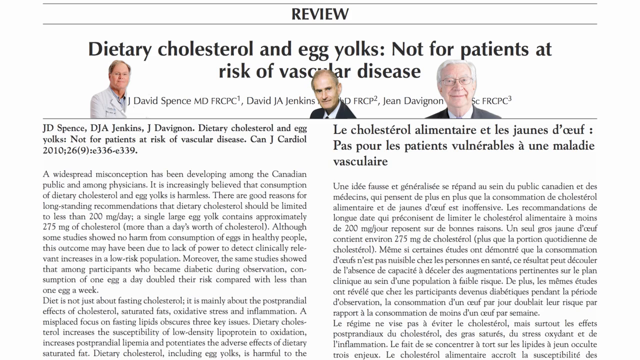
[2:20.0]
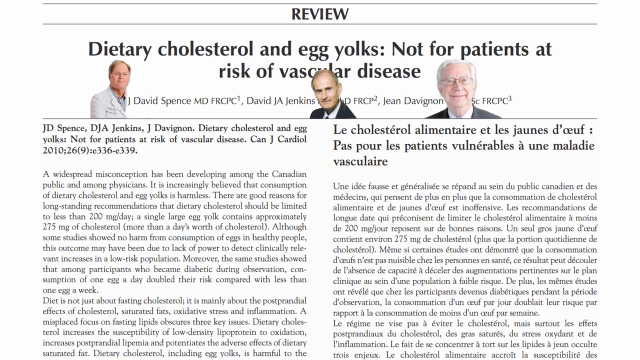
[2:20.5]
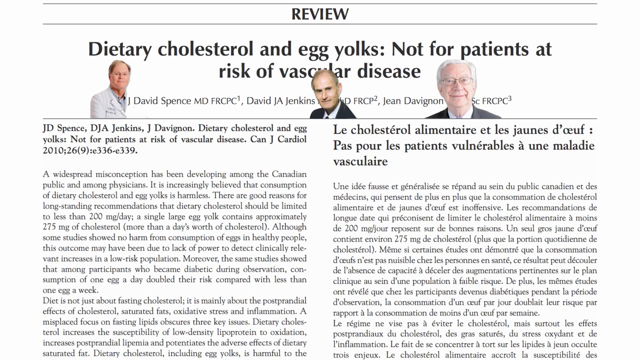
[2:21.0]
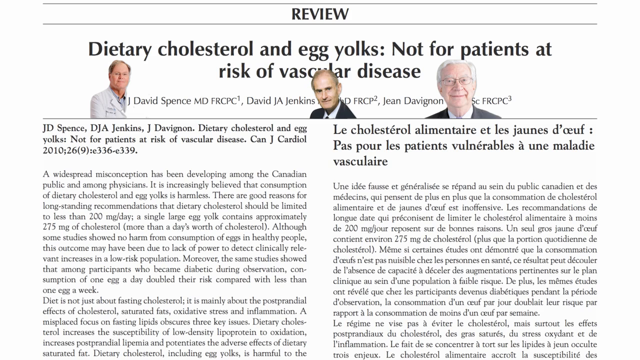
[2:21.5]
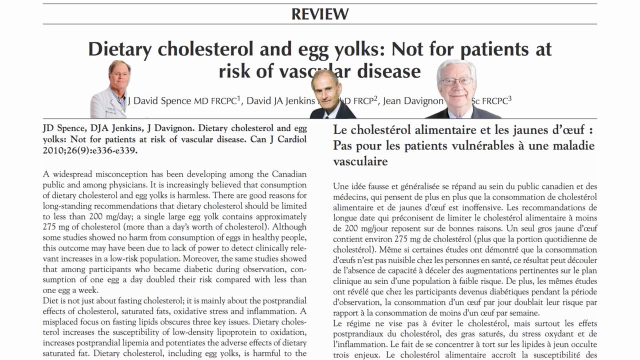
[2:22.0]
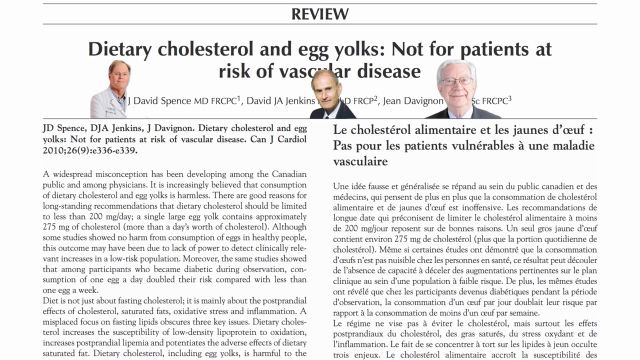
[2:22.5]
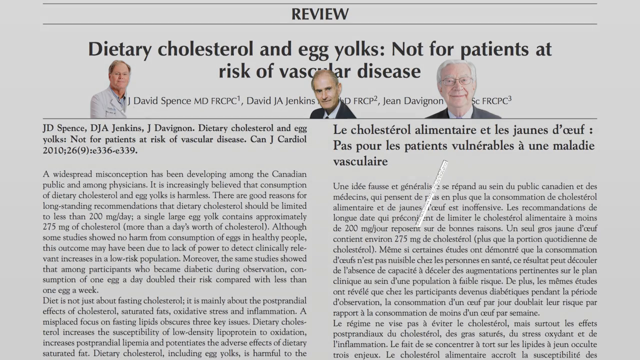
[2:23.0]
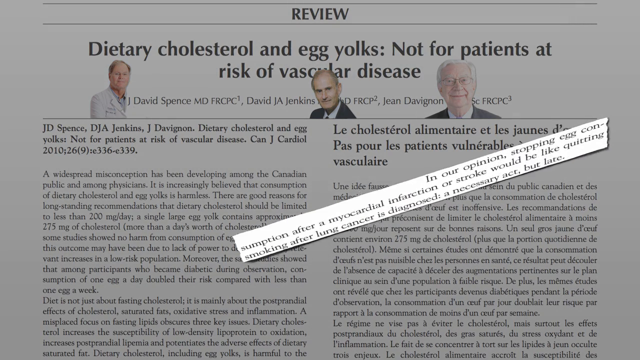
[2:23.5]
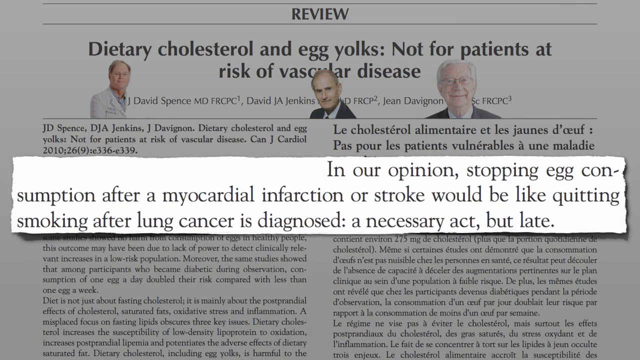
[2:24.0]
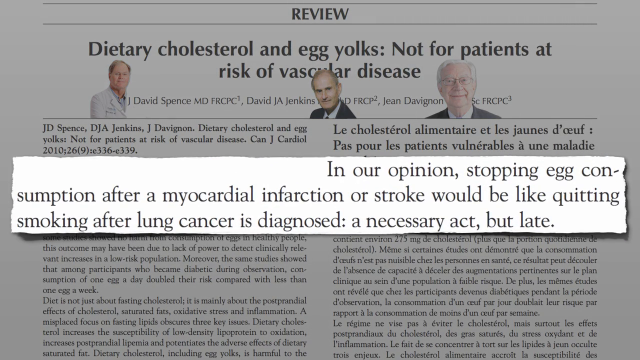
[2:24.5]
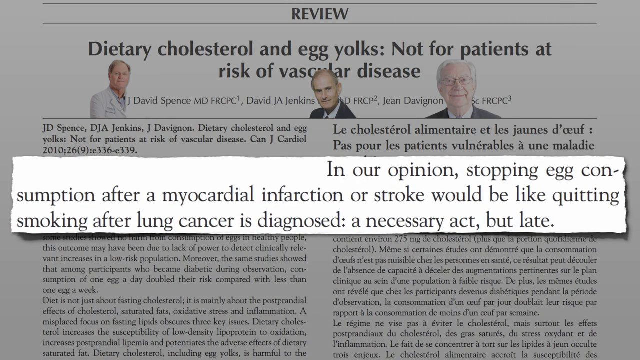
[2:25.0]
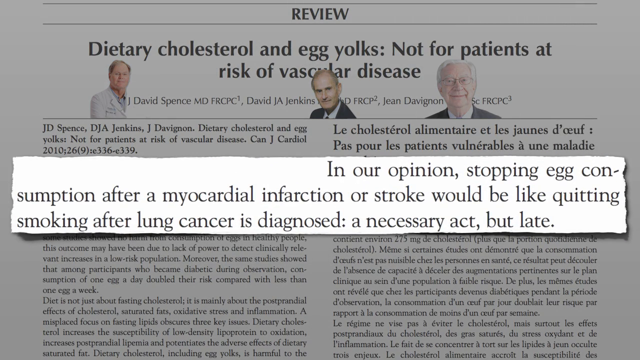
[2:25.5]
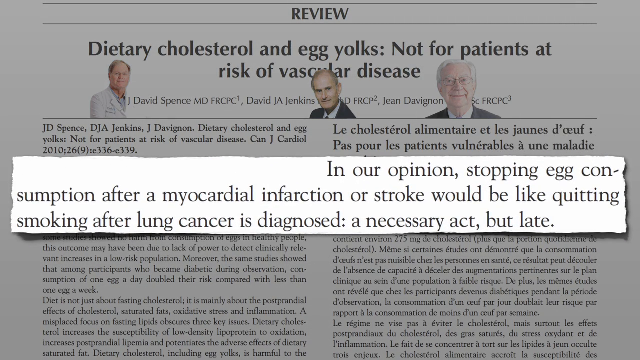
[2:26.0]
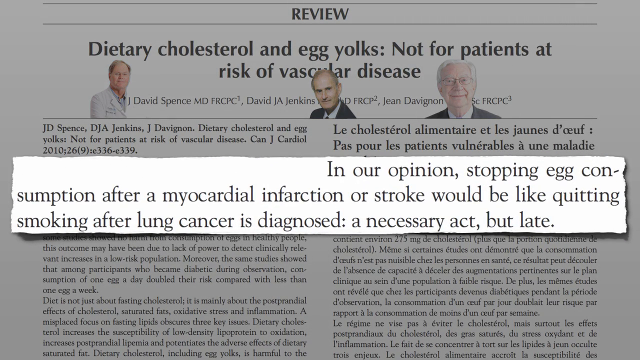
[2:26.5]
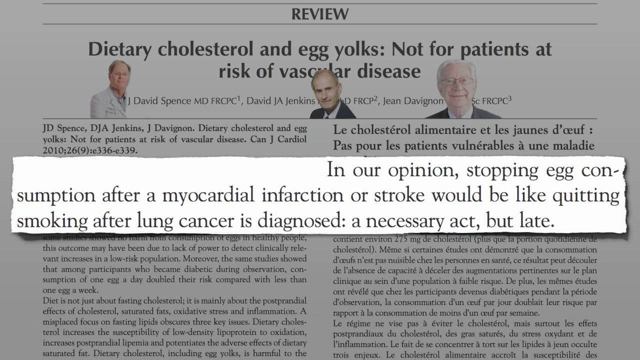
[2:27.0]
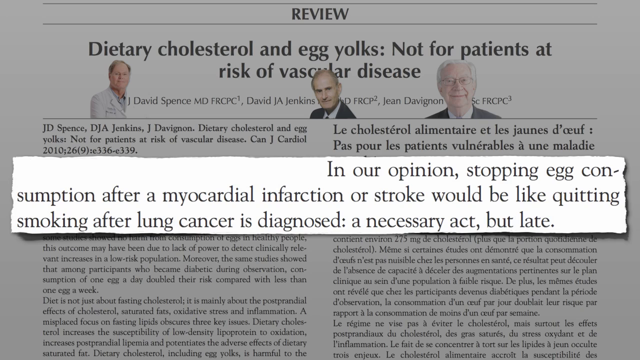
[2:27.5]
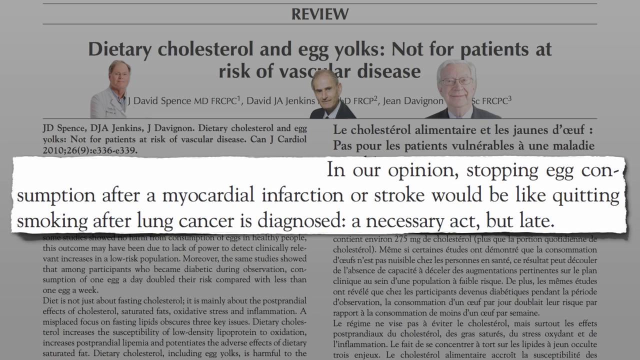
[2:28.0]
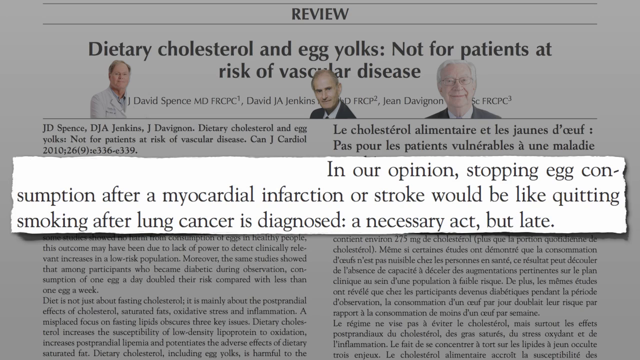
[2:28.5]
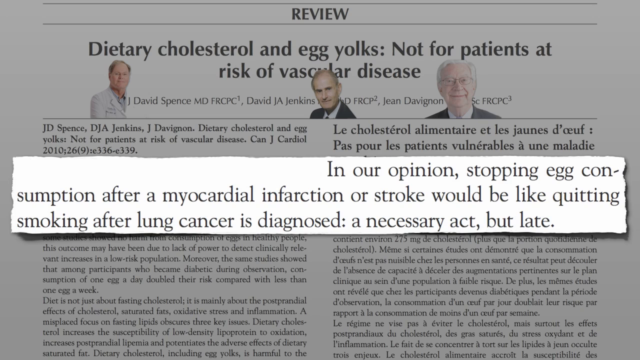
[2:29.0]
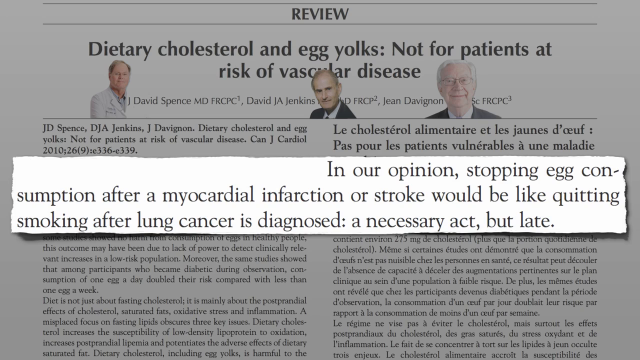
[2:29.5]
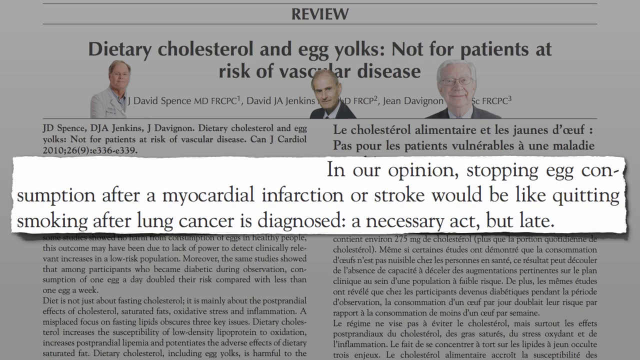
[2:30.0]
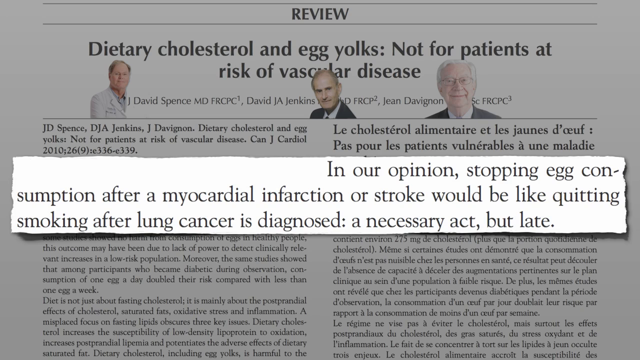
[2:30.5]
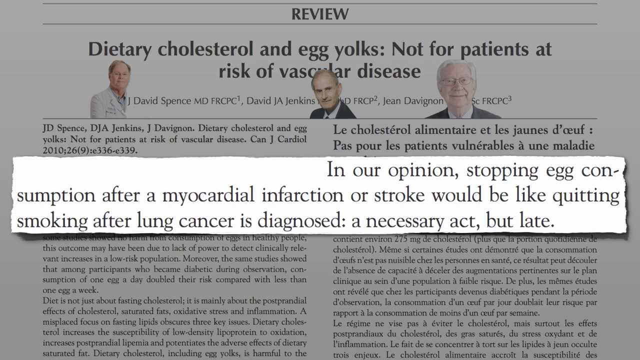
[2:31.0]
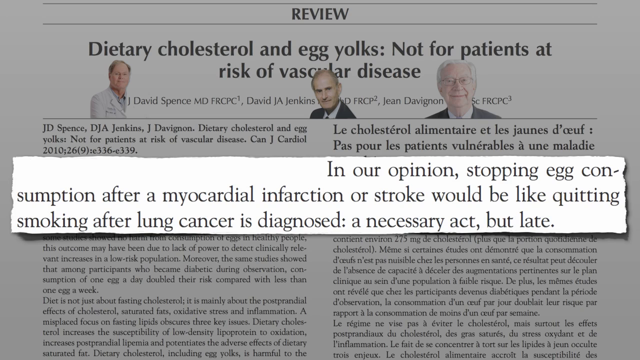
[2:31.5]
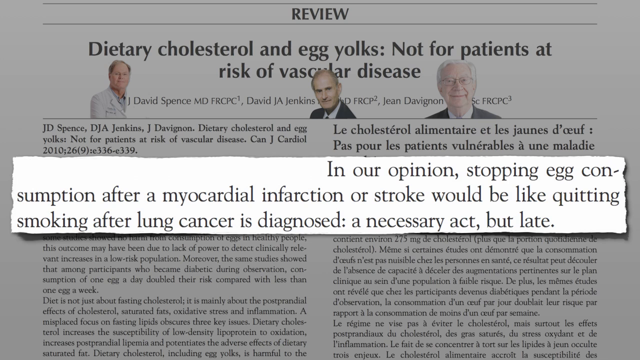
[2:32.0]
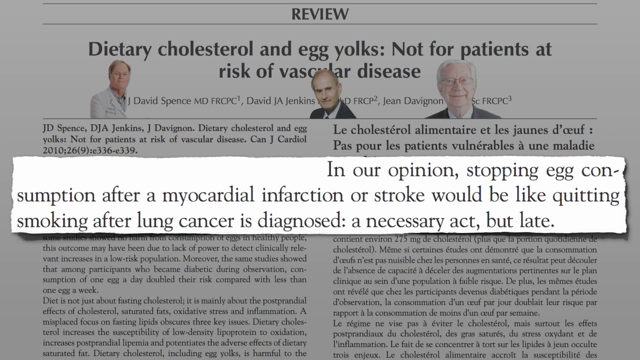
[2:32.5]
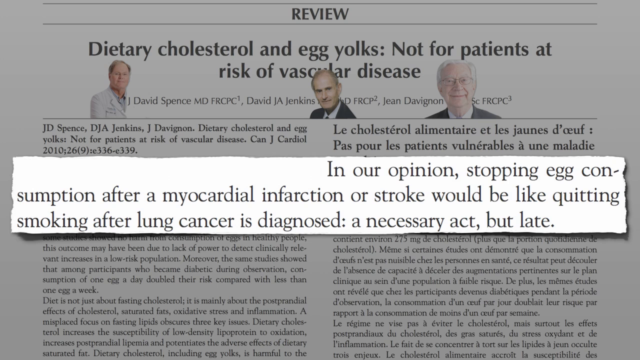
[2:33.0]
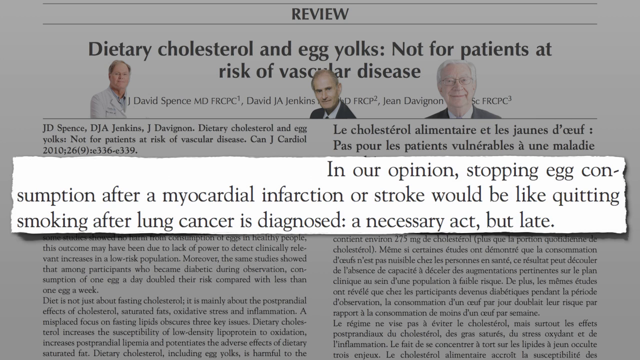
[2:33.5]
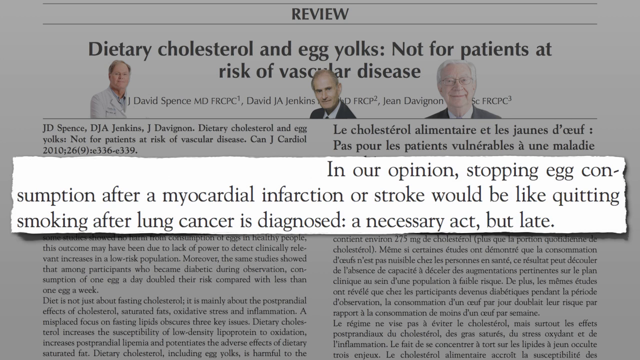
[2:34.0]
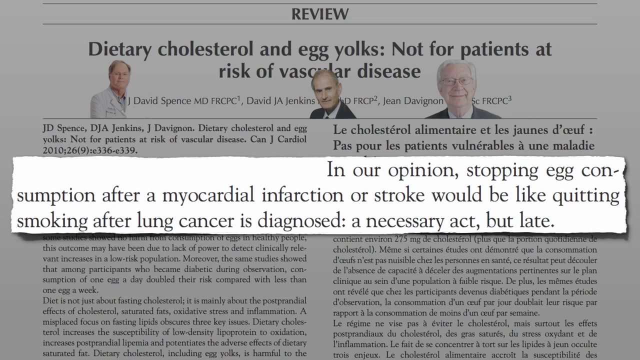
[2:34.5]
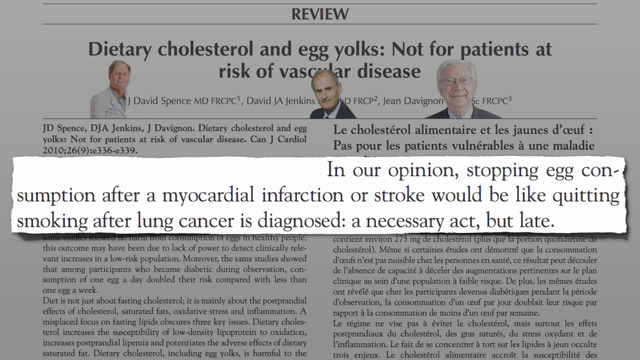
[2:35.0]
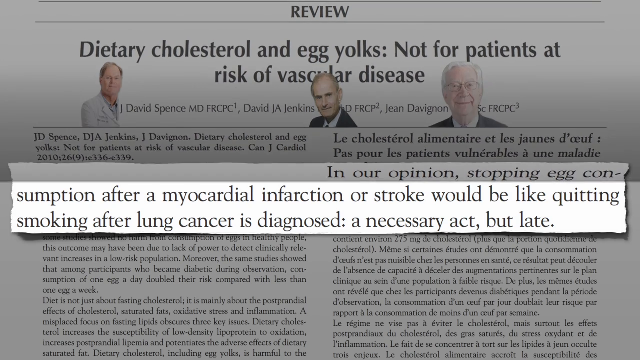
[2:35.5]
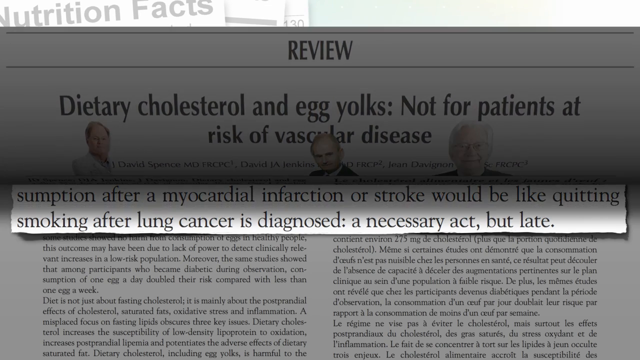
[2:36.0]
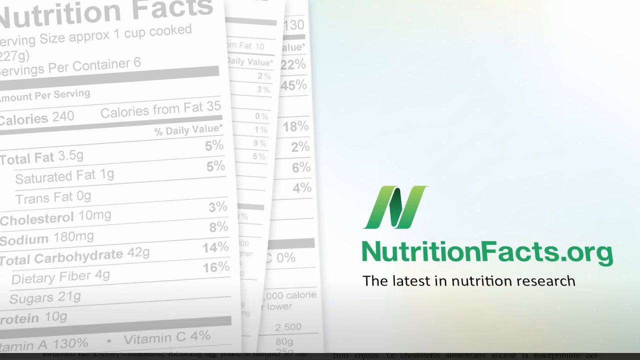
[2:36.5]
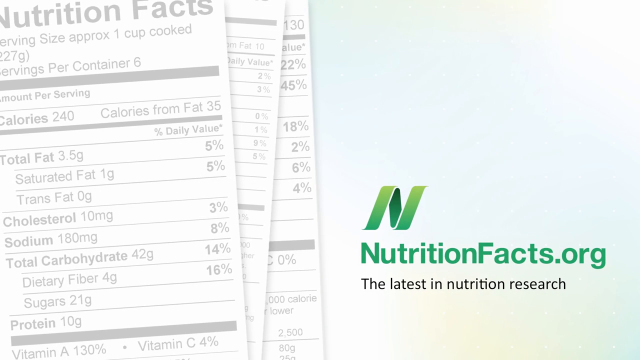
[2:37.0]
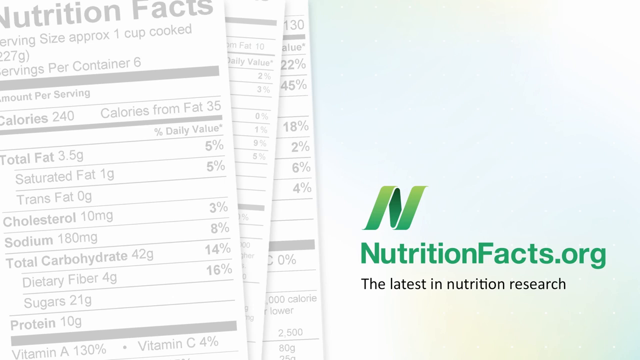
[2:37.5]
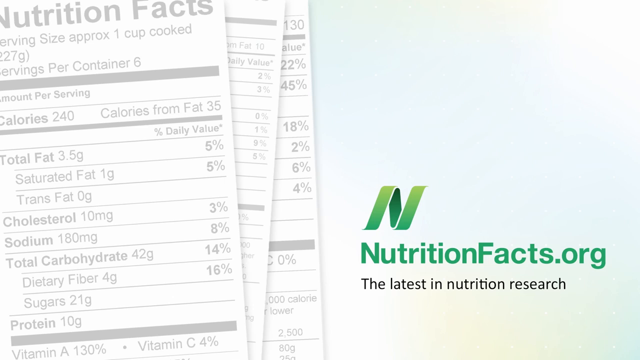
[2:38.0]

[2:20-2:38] A review titled "Dietary cholesterol and egg yolks, not for patients at risk of vascular disease" is on a white page, with the left column of text in English and the right column in French. The authors' names are at the top of the page, with a cutout image of each author's face next to their name. From the middle right side of the screen, a white rectangle with black text grows larger and larger and moves toward the middle of the screen, reading "In our opinion, stopping egg consumption after a myocardial infarction or stroke would be like quitting smoking after lung cancer is diagnosed. A necessary act but late." The top half of the page then folds over and downward.